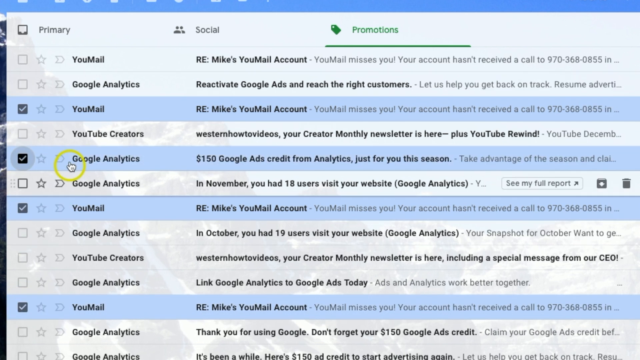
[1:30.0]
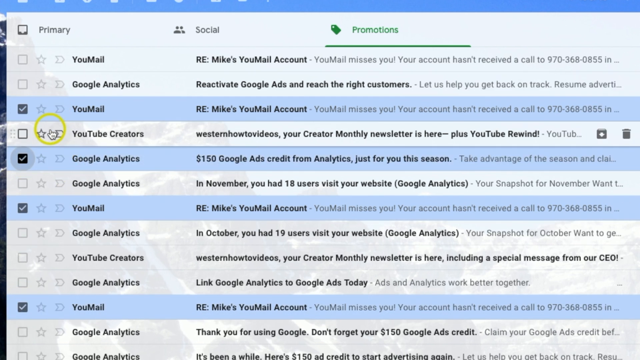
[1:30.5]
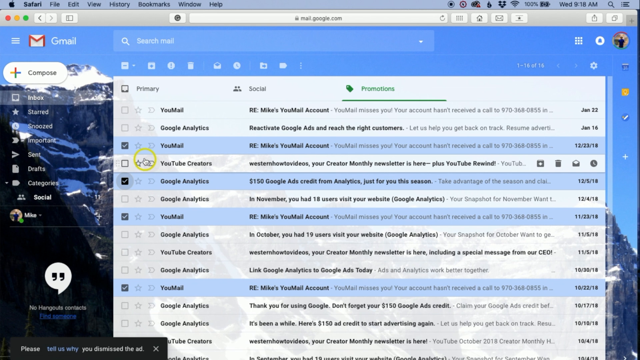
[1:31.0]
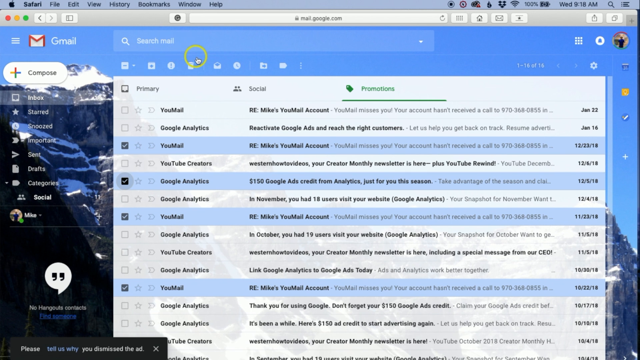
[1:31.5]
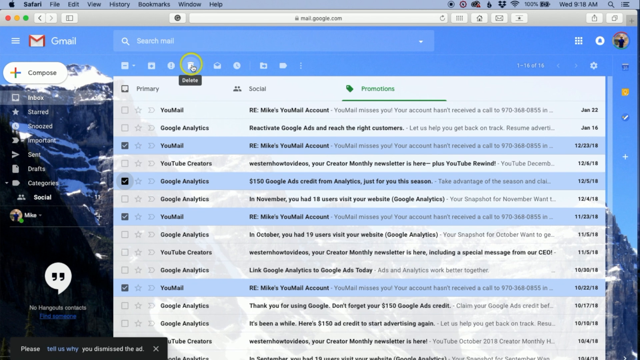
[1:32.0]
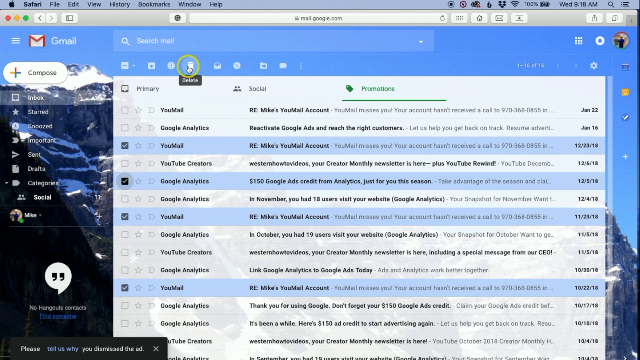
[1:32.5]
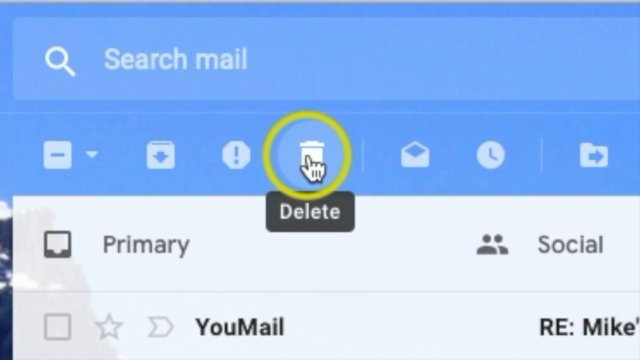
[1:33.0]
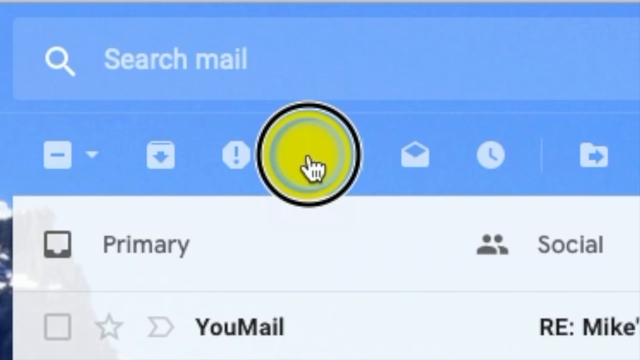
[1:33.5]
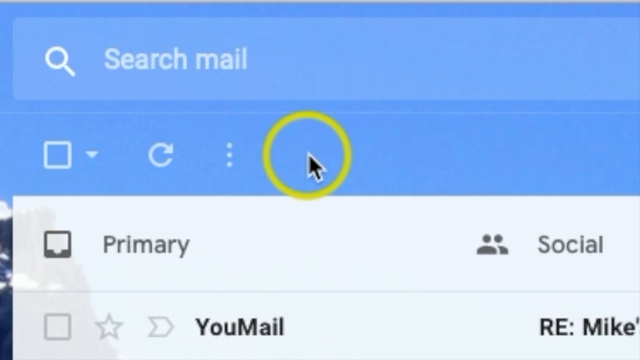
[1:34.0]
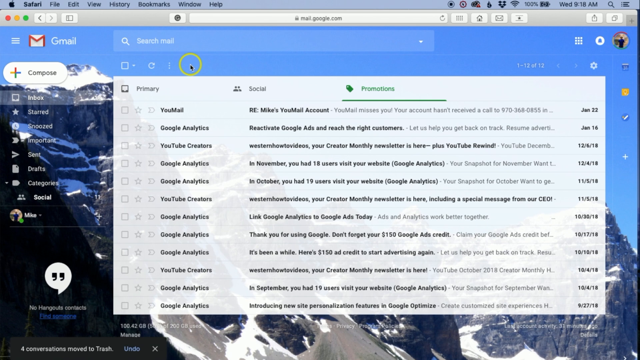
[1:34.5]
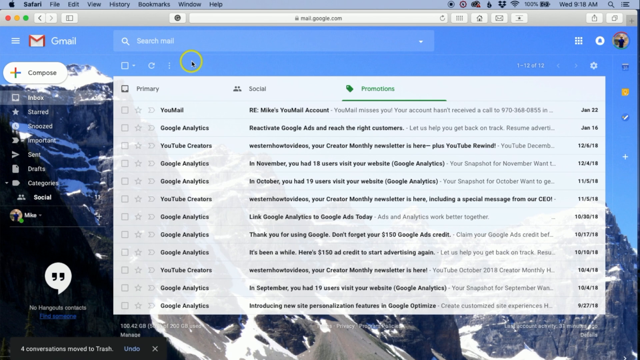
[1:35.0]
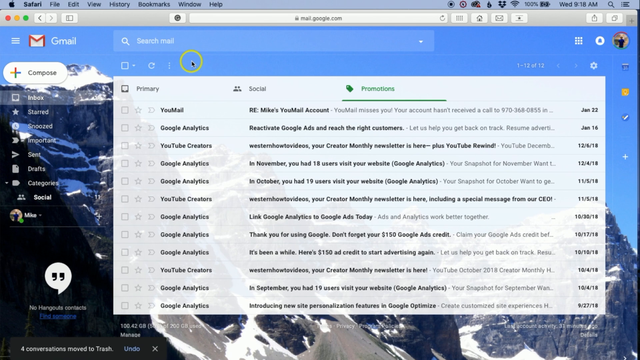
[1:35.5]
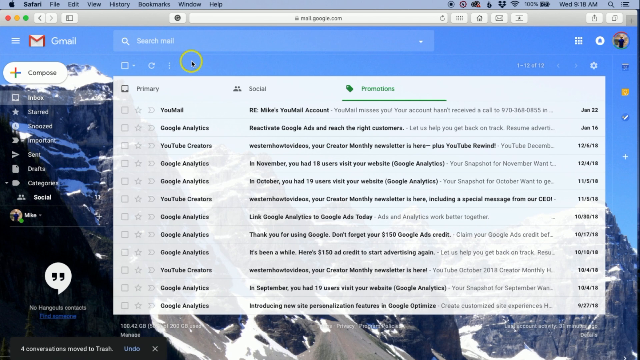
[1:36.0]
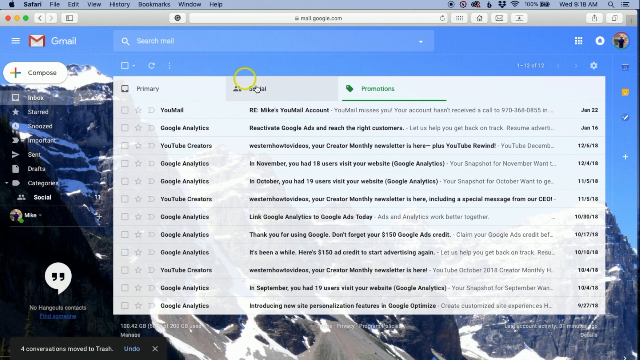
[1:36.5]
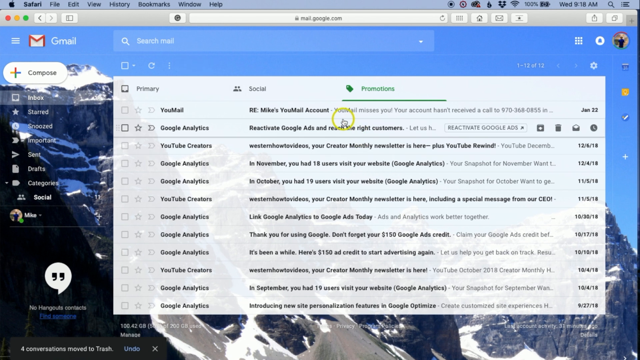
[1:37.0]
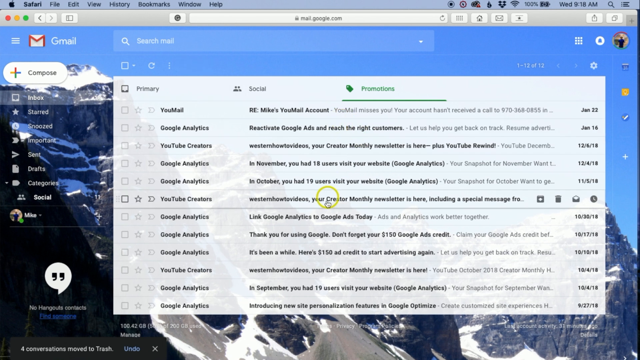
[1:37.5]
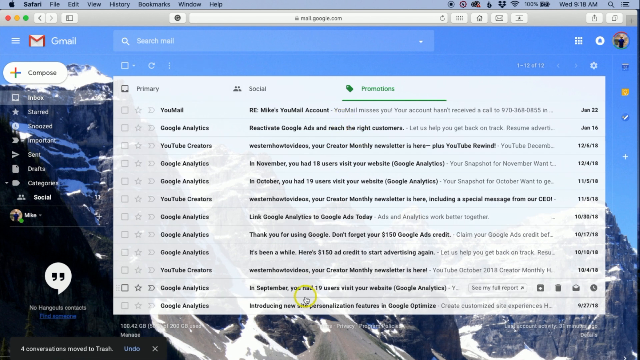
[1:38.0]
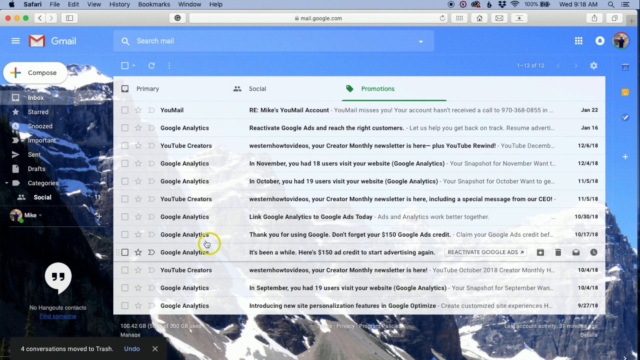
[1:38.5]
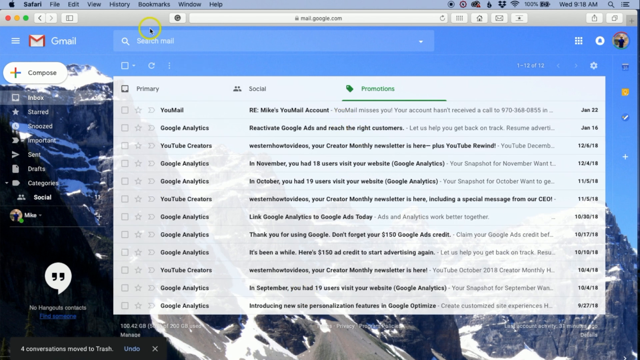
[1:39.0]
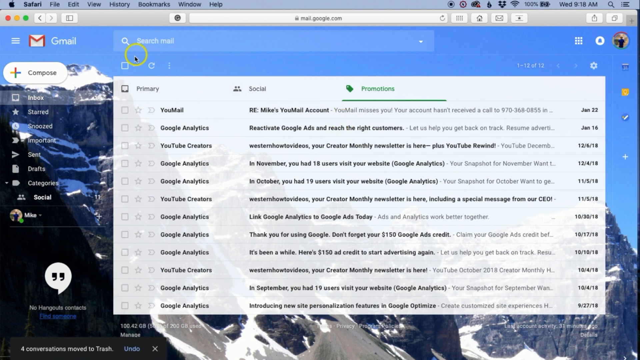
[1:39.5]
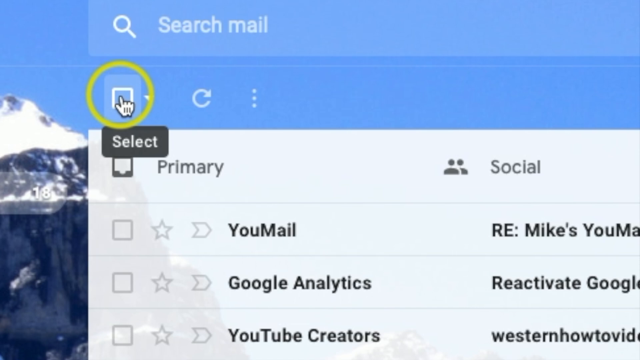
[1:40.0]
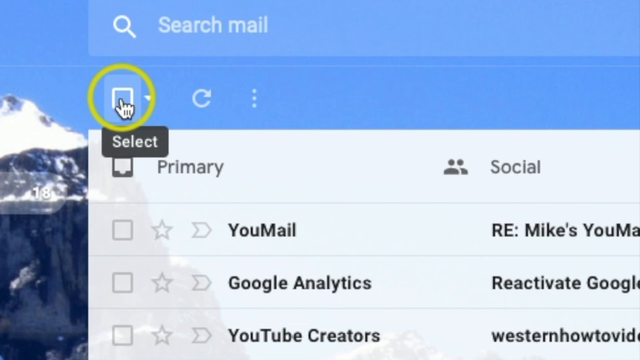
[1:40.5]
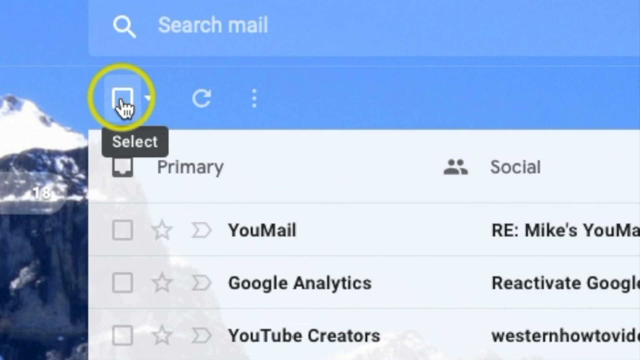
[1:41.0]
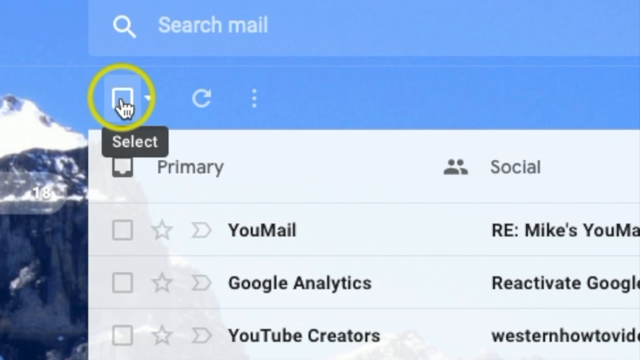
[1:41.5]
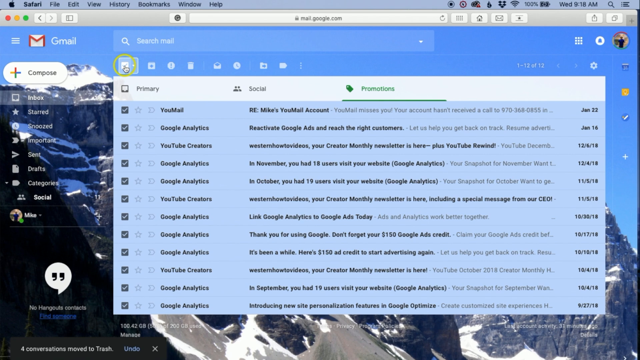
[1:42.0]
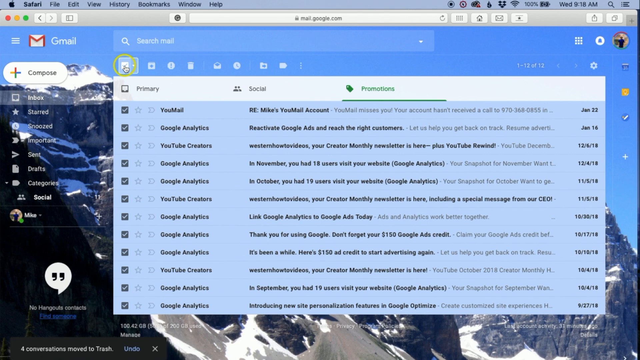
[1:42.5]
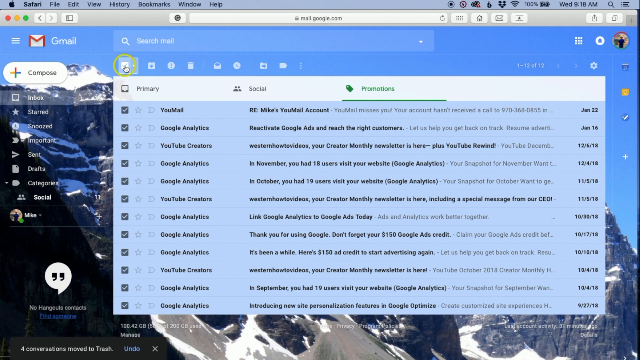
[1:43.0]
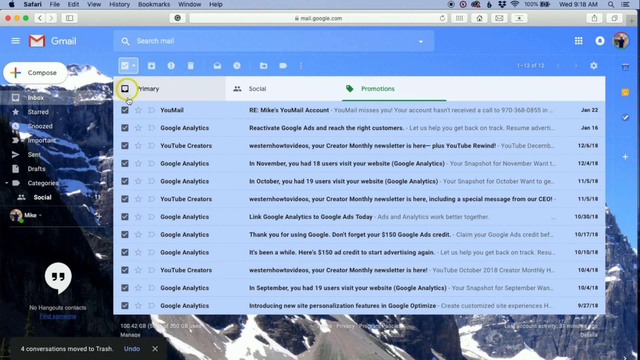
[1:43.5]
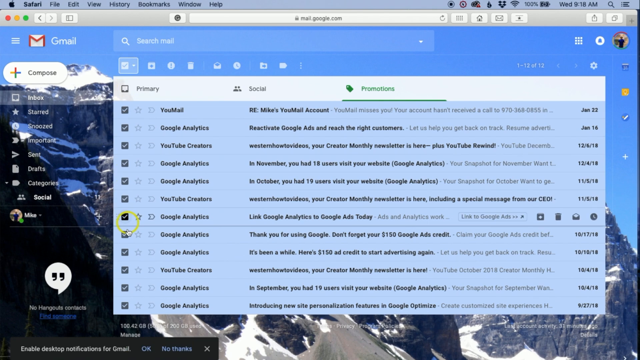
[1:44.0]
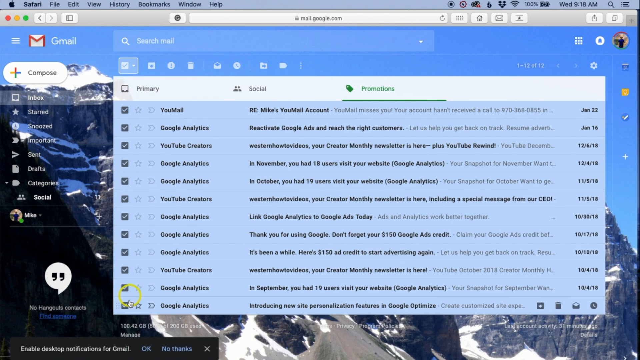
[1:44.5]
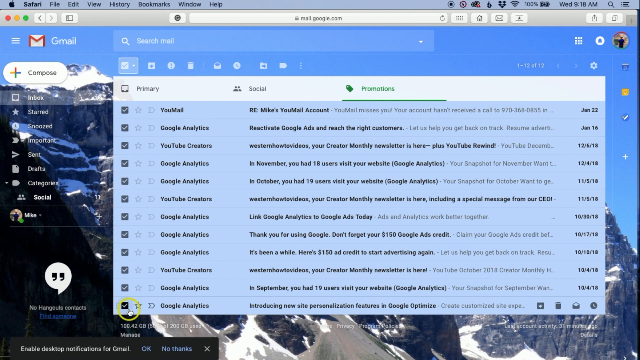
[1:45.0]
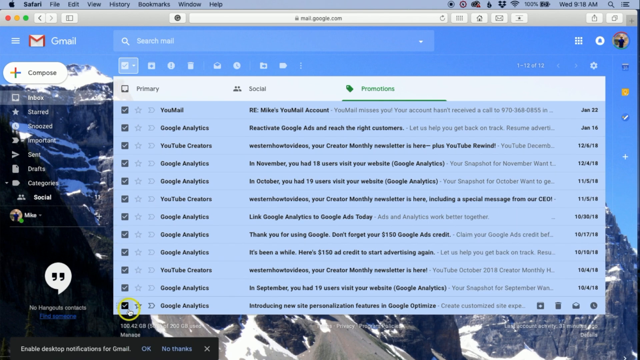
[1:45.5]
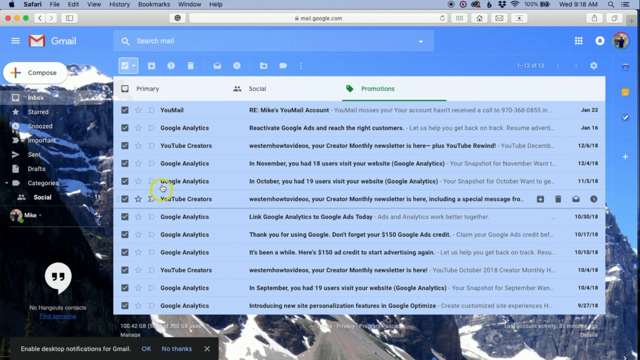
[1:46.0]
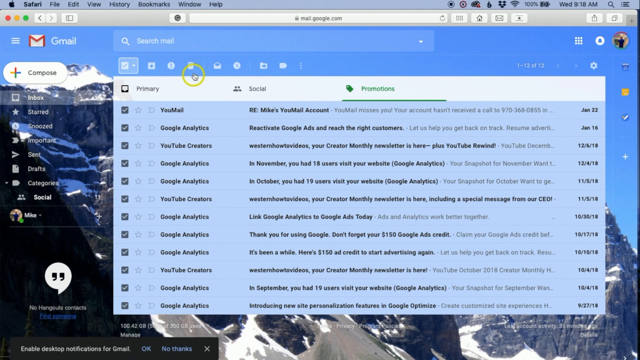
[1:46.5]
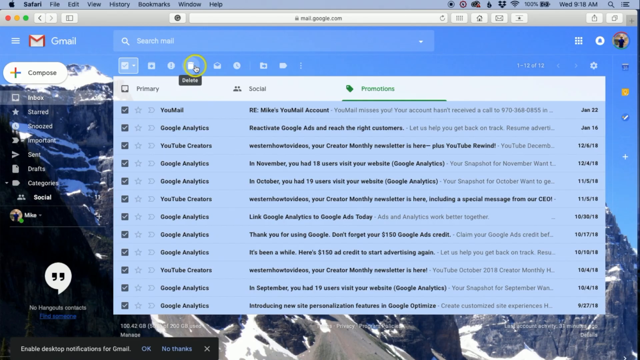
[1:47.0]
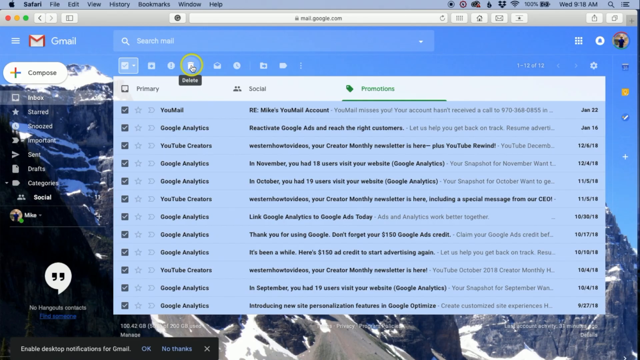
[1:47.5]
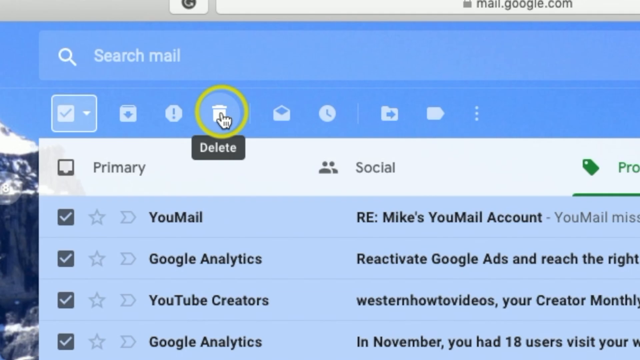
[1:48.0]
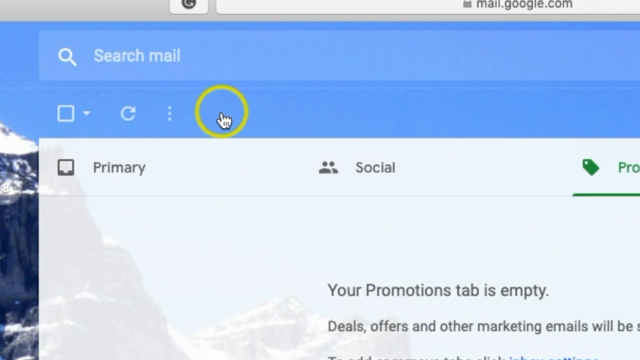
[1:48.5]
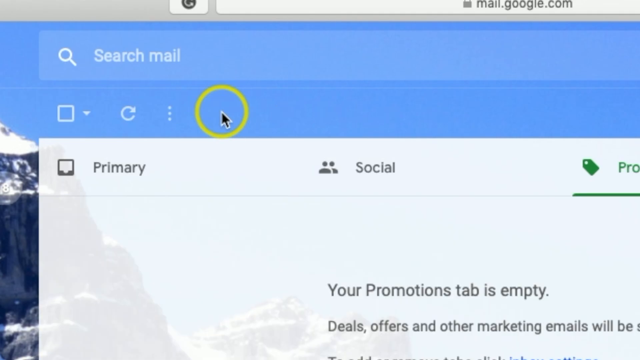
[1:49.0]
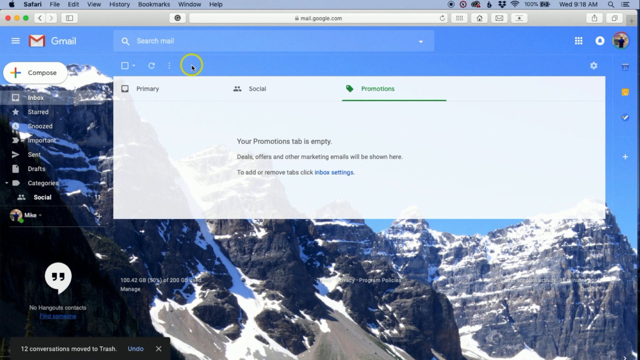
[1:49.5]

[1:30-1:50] Four items are selected: an email, a Google Analytics email, and two more emails. The cursor moves up to the top and hovers over delete, and the whole screen zooms in toward delete. Delete is clicked and everything selected is deleted. The cursor goes all the way to the bottom and hovers over Google Analytics, then jumps up to the left and clicks. The screen zooms in over the square under "select", which is clicked, selecting everything in the inbox. A trash can says "delete". Text on the screen reads "Since your Promotions tab is empty, Deals, Offers, and Other Marketing must be shown here. To add or remove tabs, click Inbox Settings."